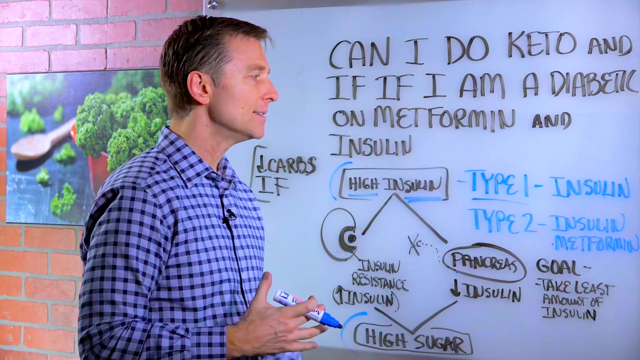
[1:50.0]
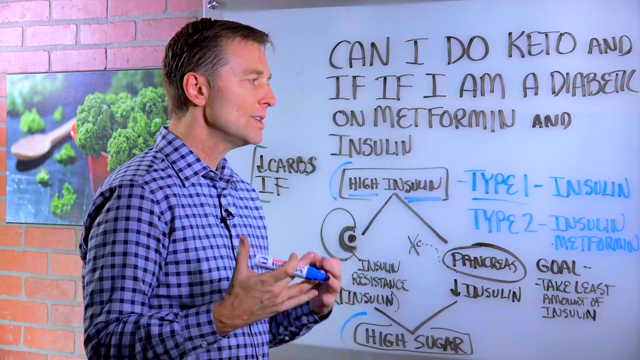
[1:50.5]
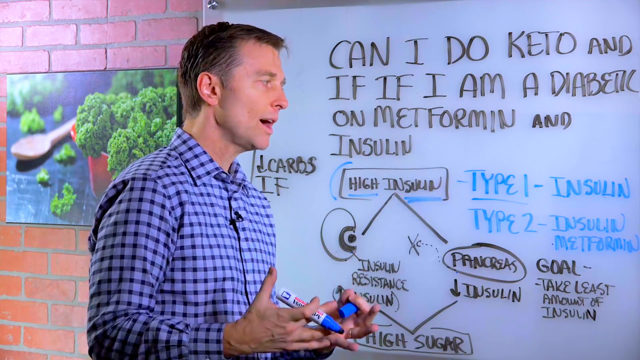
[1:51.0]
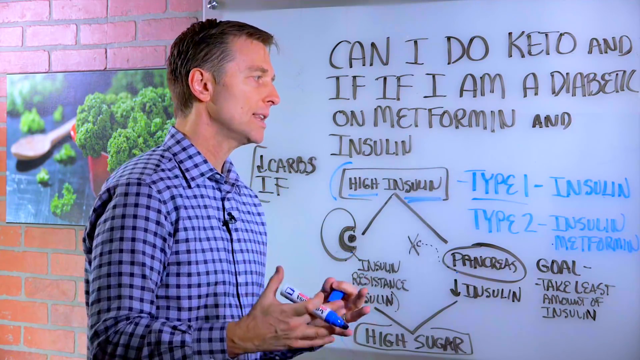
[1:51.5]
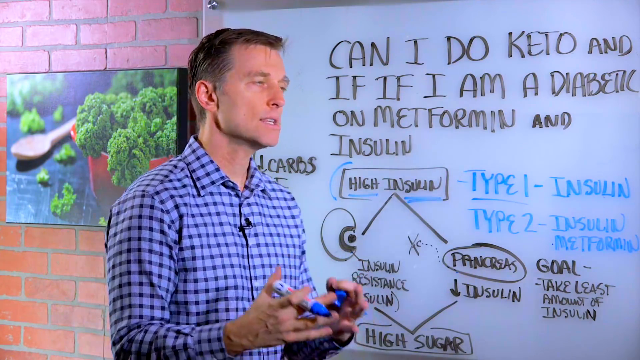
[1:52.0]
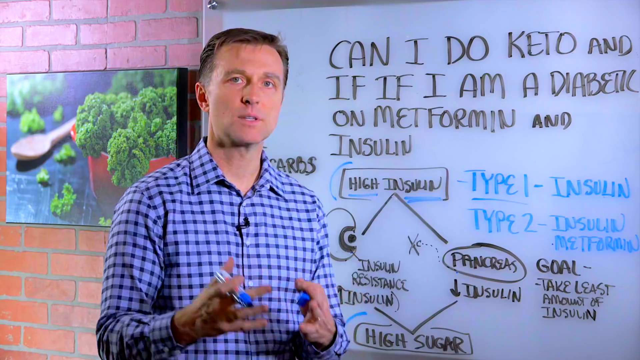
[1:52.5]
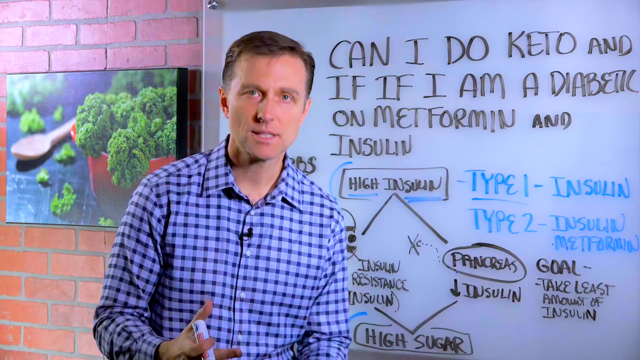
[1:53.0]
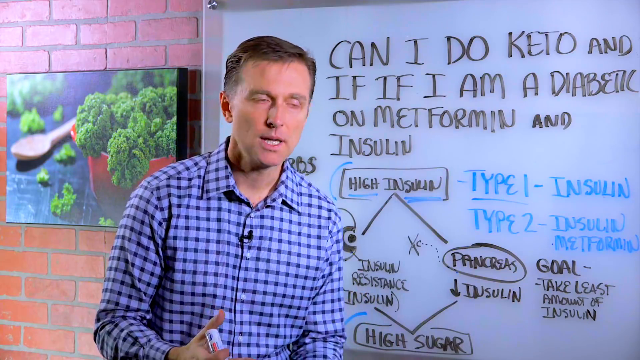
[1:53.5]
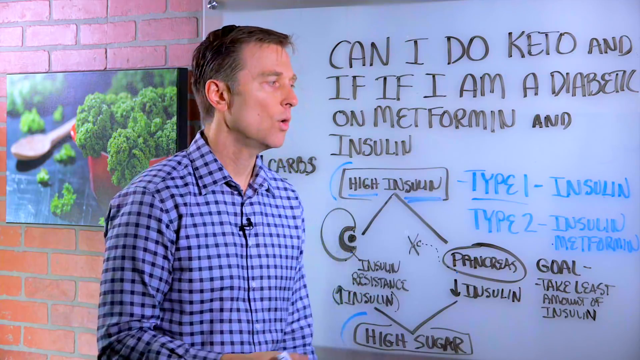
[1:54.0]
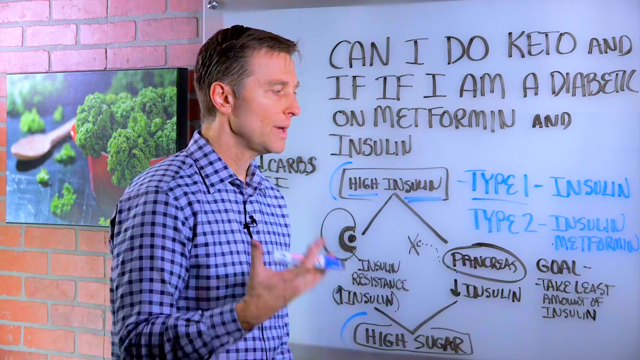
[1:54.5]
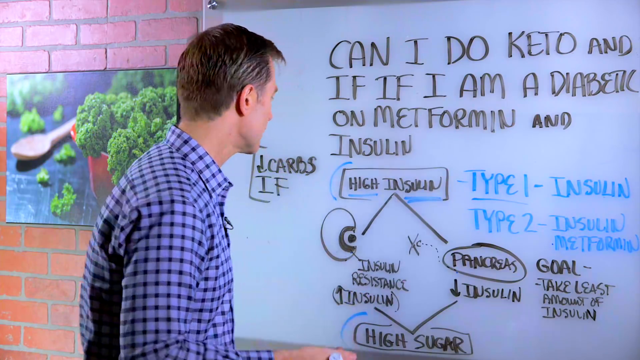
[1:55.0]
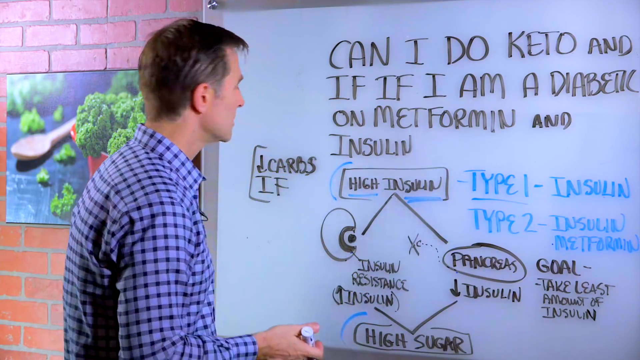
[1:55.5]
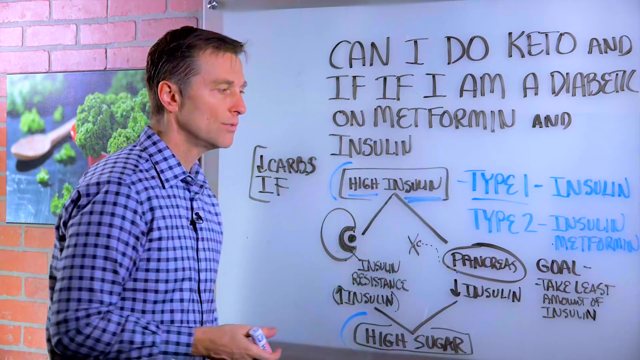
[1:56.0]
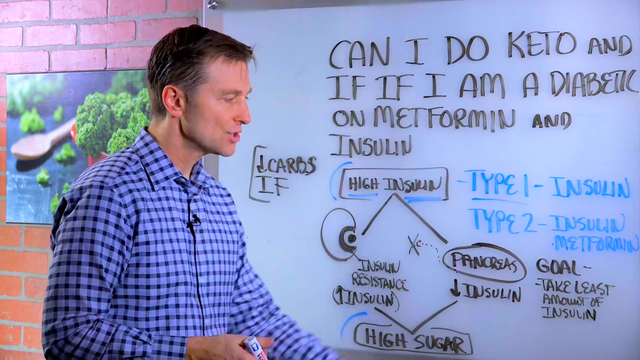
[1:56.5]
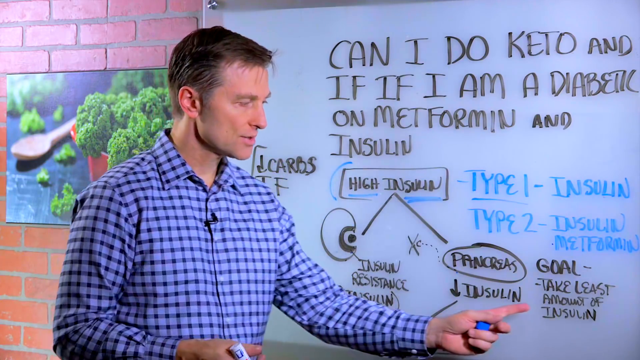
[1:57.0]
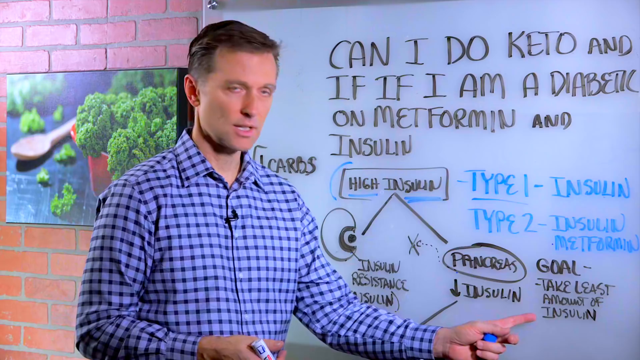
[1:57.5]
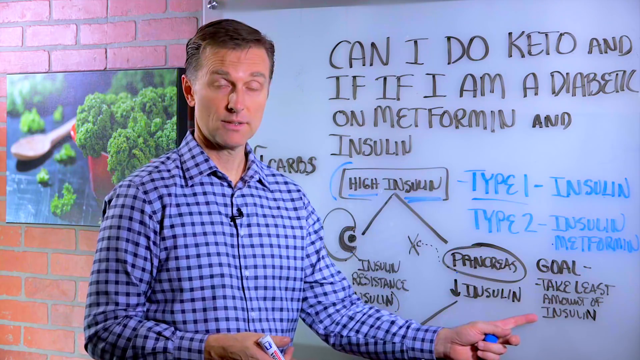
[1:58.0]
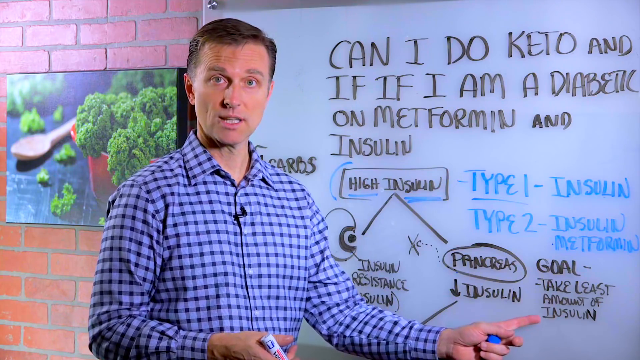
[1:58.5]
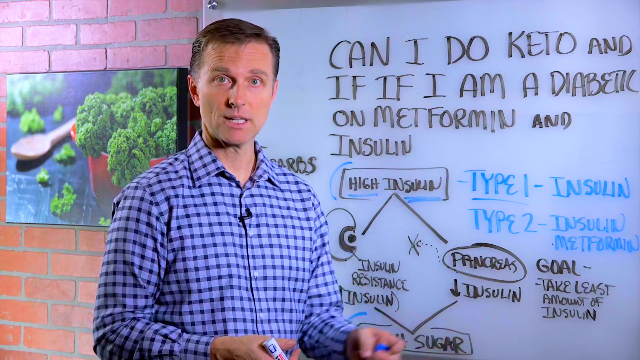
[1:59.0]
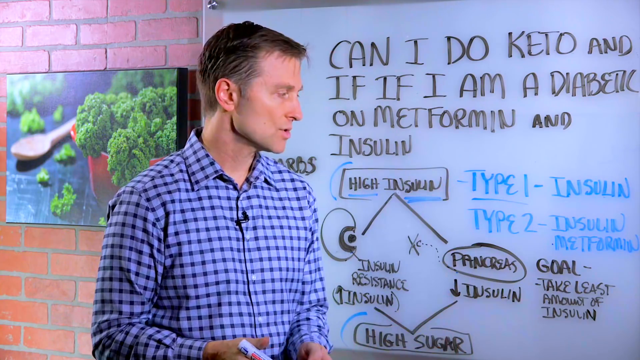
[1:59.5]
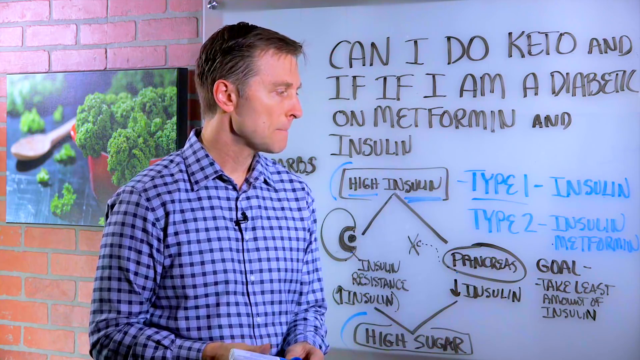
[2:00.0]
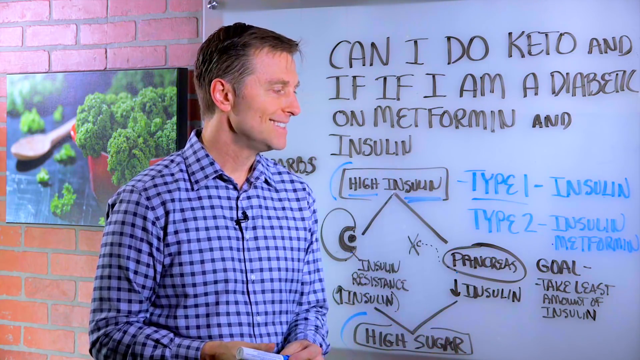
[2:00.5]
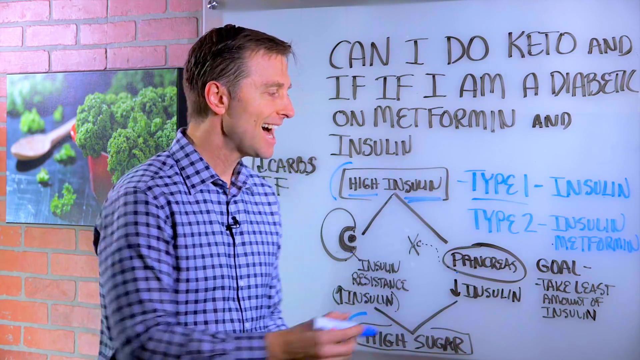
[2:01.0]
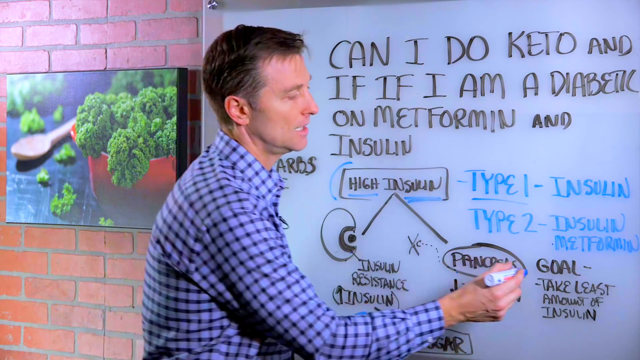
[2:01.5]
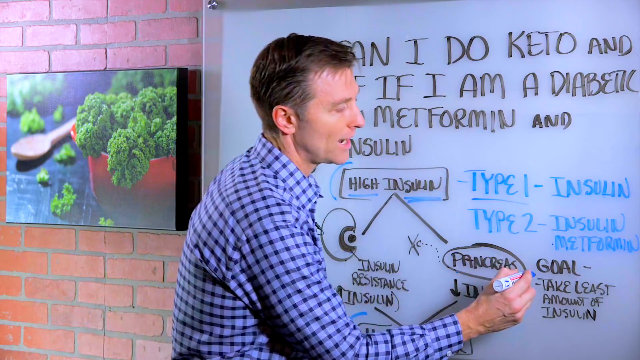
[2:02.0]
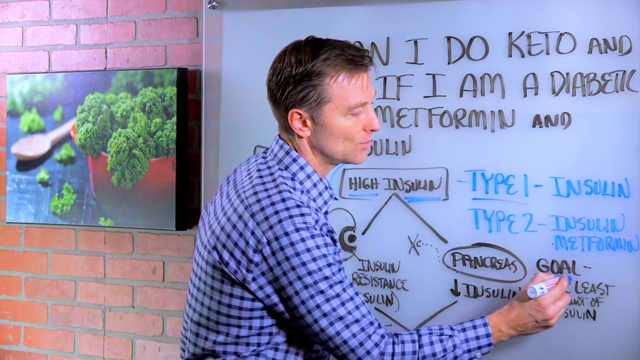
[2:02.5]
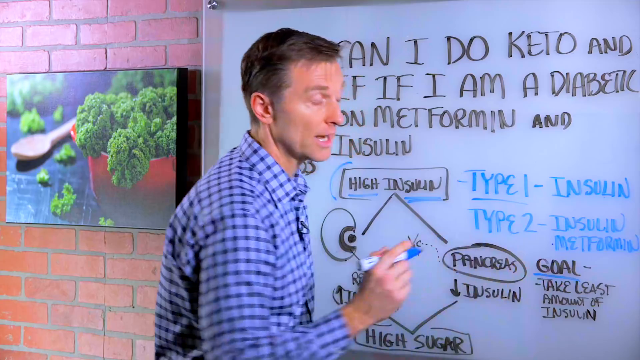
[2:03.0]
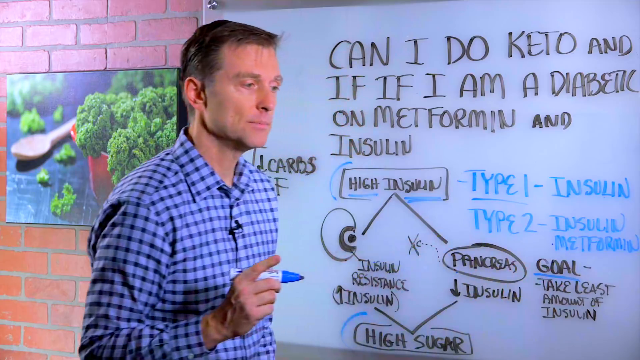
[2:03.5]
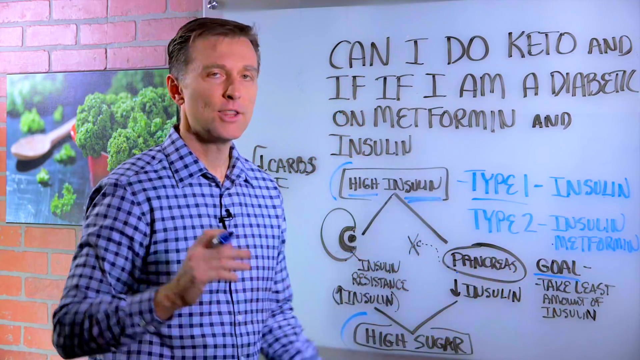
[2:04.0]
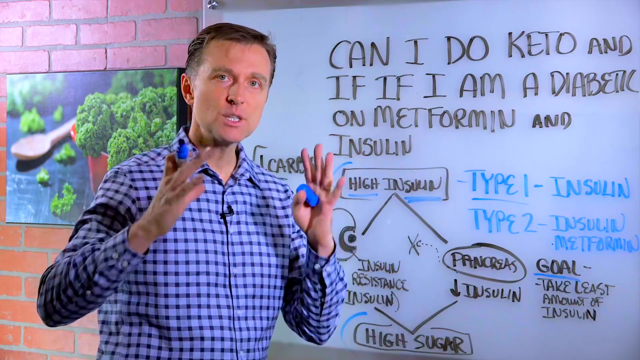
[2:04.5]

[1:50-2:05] The man points to a part of the board that says goal and underlines it; the goal is to take the least amount of insulin. He then looks at the camera and gestures with his hands near his face as he talks, still holding the blue marker as if not done using the board.